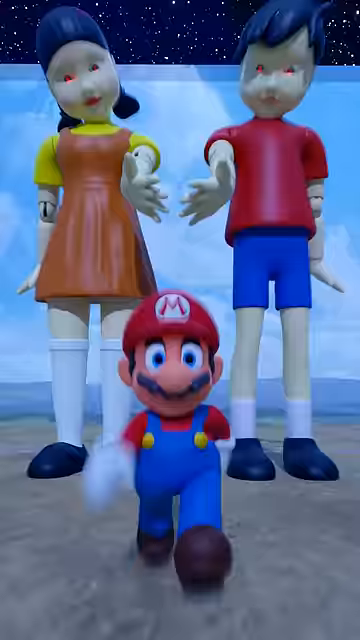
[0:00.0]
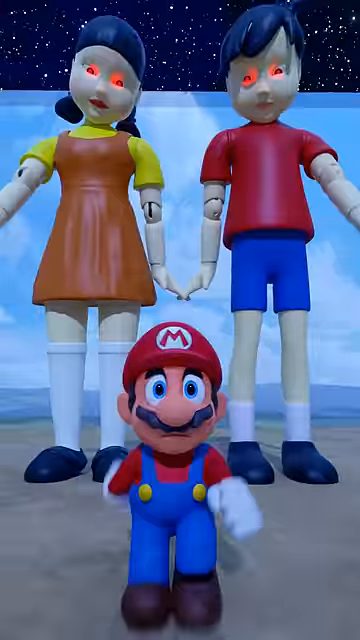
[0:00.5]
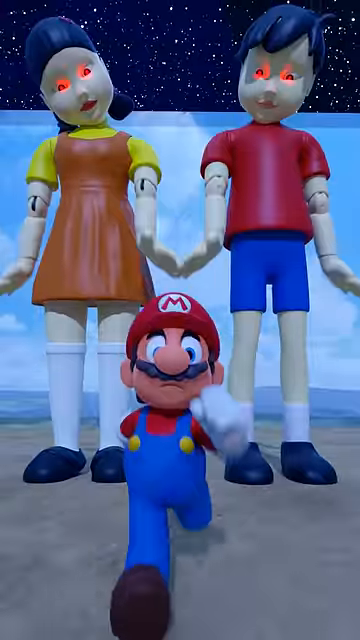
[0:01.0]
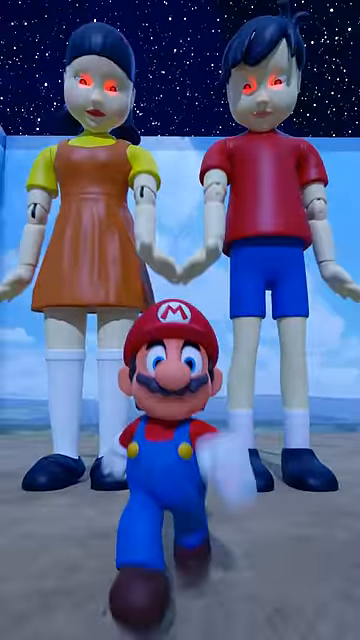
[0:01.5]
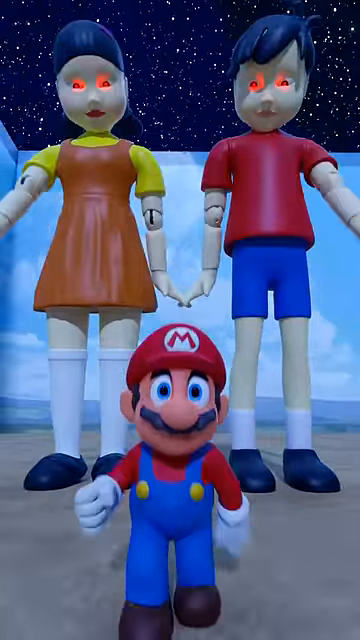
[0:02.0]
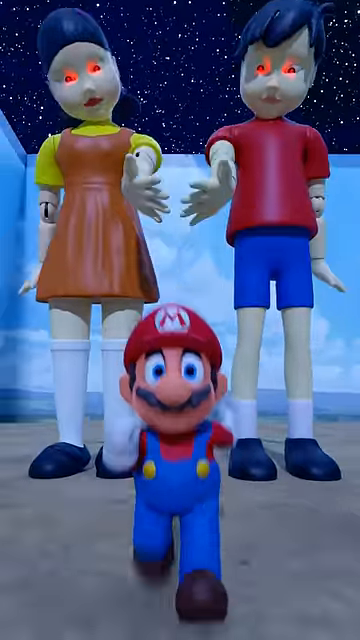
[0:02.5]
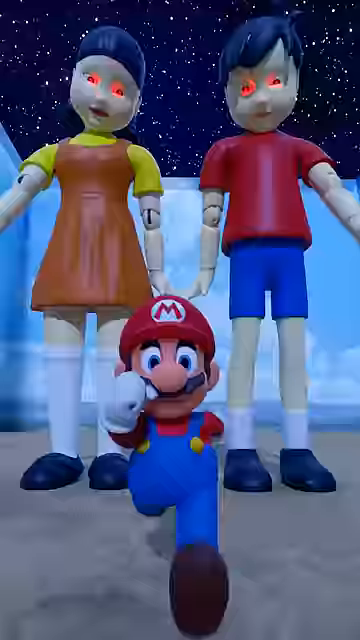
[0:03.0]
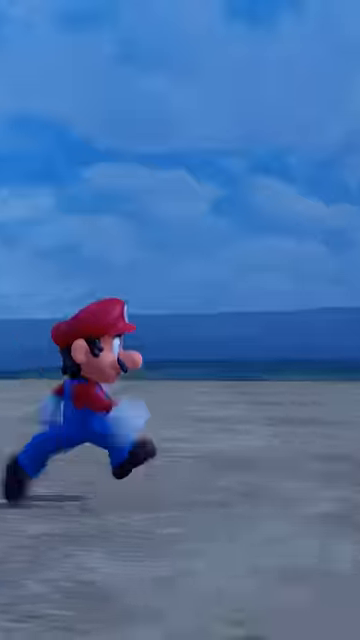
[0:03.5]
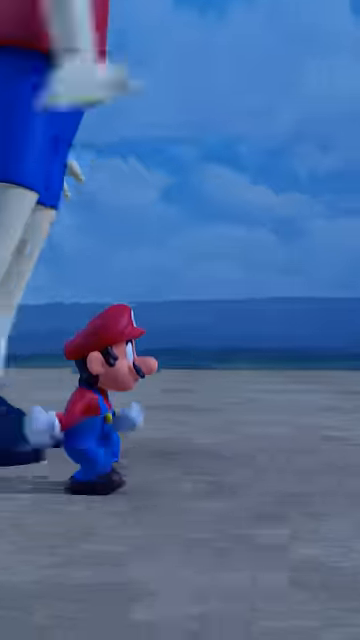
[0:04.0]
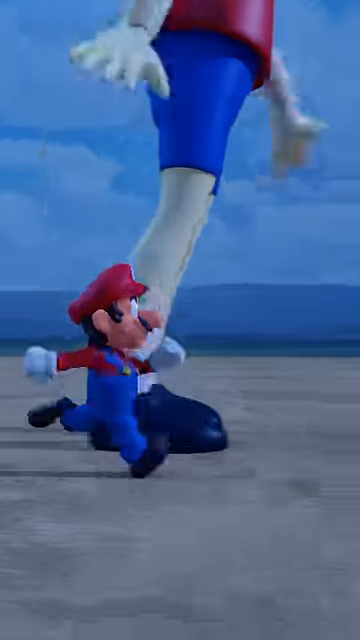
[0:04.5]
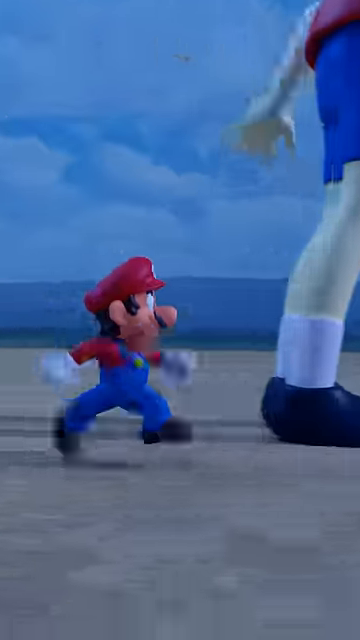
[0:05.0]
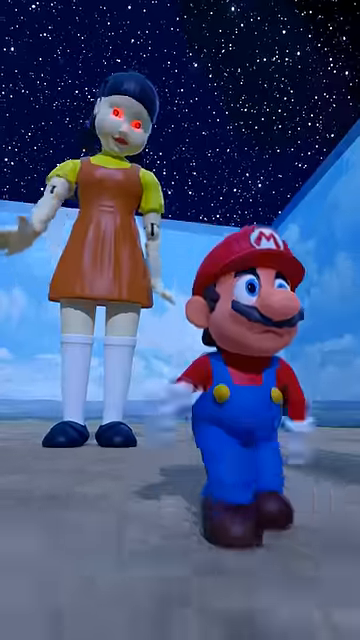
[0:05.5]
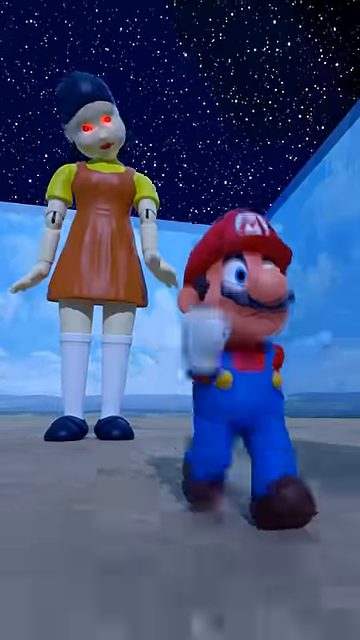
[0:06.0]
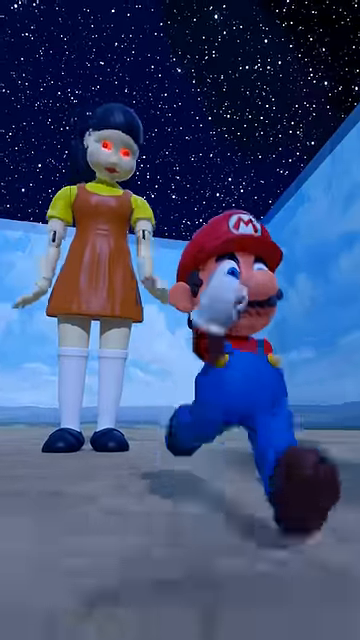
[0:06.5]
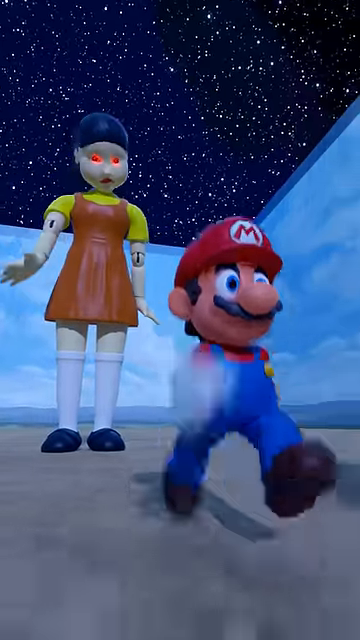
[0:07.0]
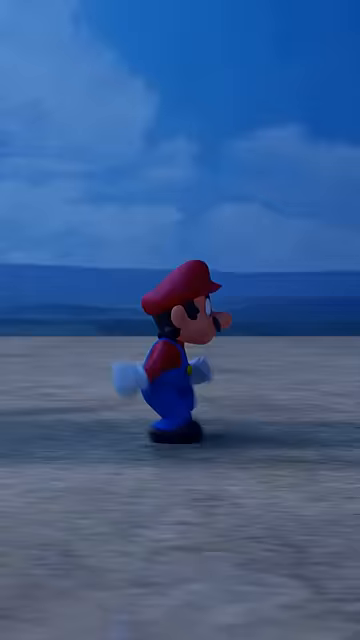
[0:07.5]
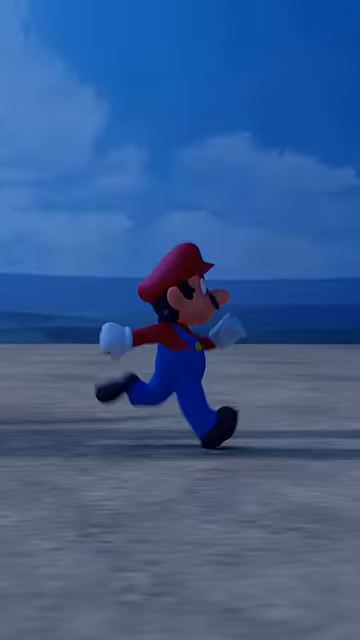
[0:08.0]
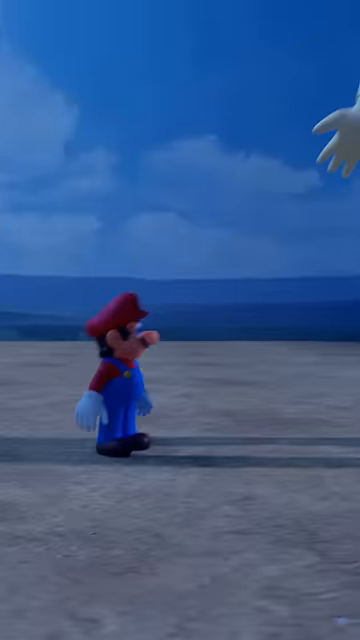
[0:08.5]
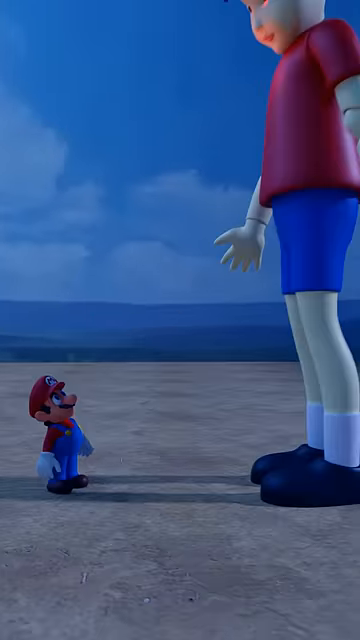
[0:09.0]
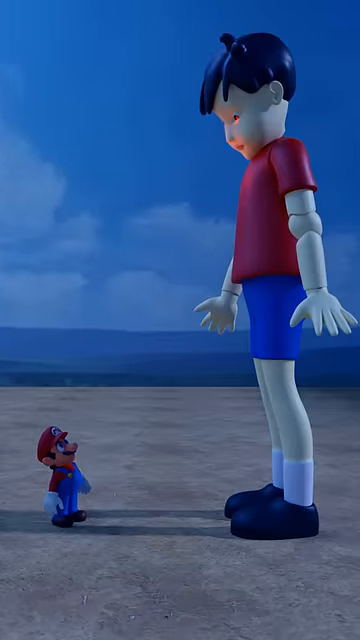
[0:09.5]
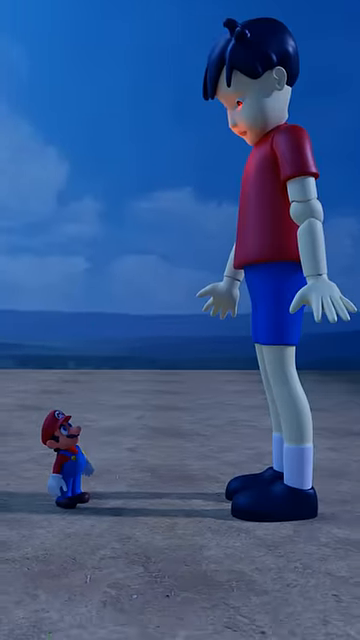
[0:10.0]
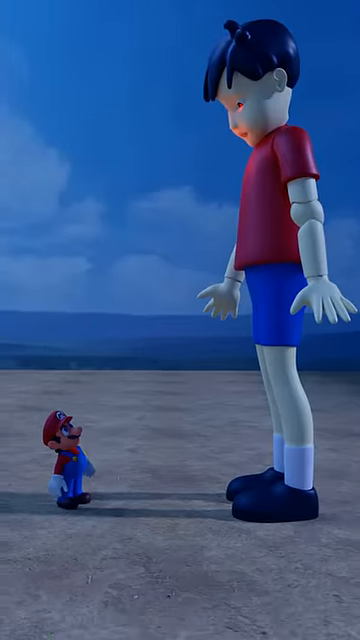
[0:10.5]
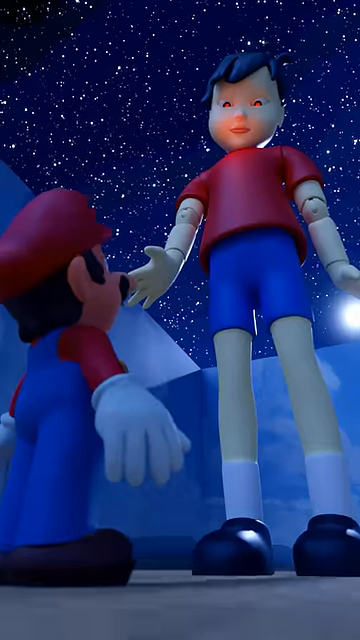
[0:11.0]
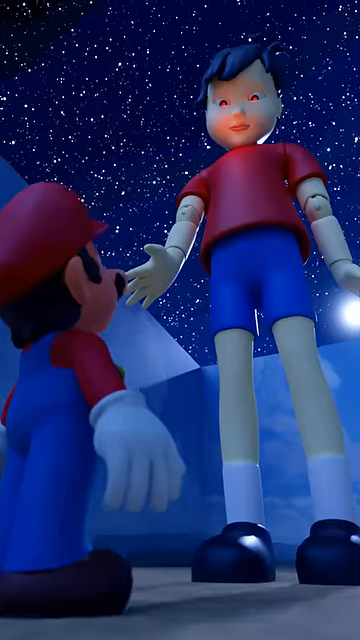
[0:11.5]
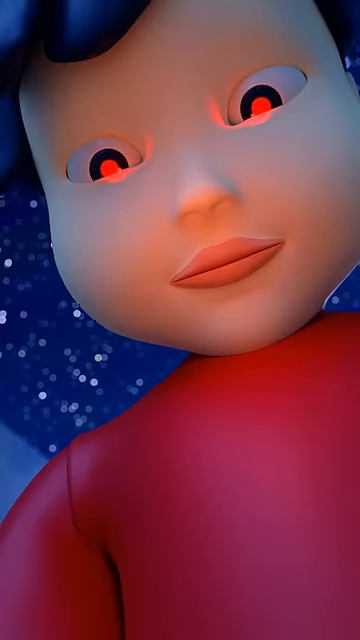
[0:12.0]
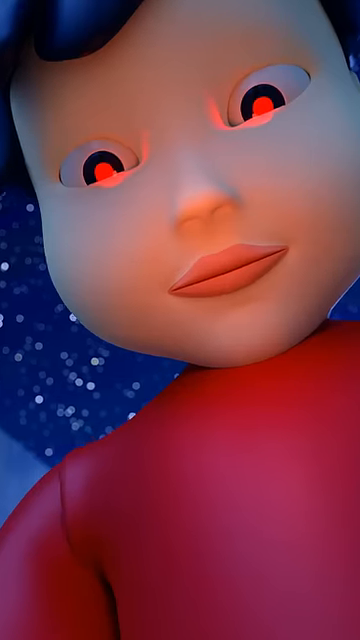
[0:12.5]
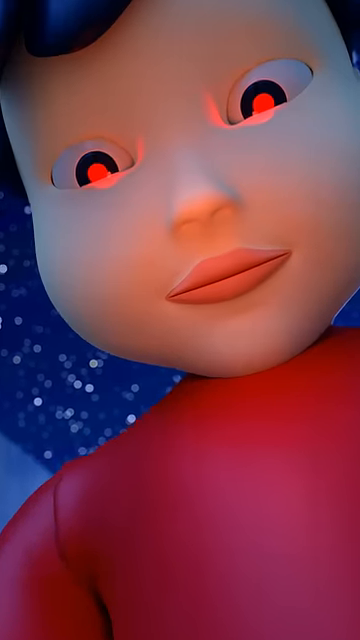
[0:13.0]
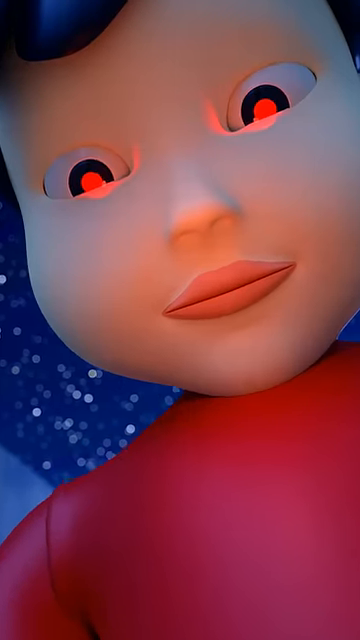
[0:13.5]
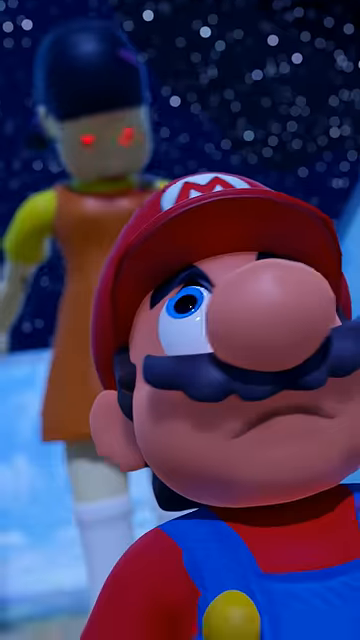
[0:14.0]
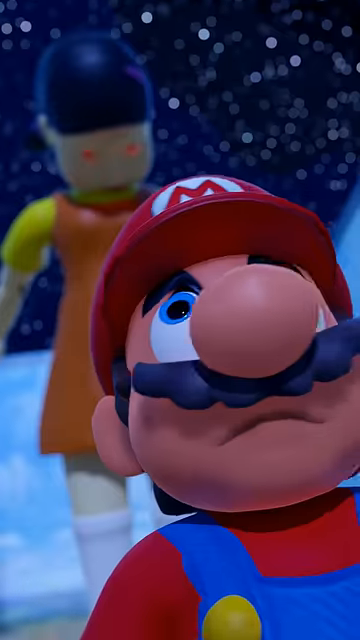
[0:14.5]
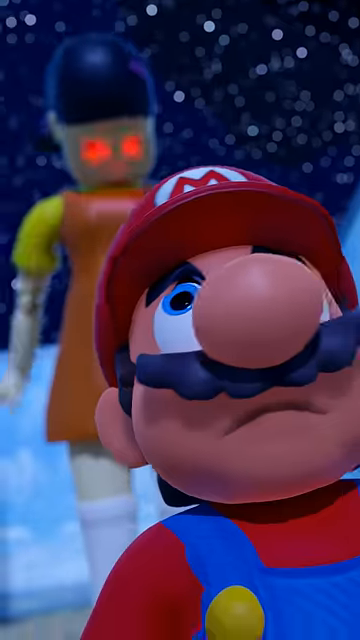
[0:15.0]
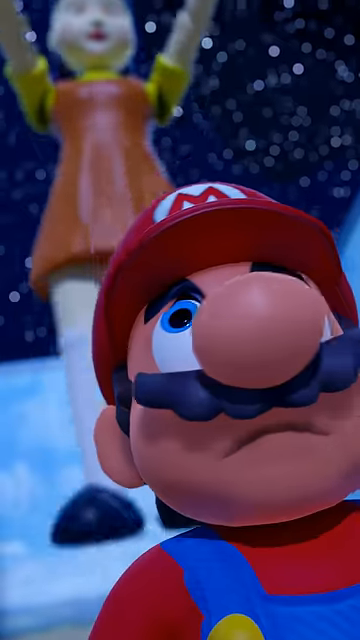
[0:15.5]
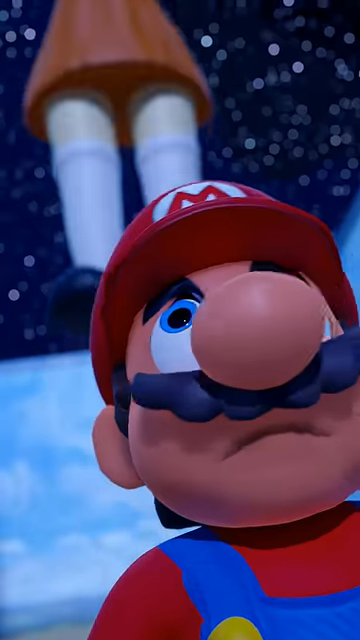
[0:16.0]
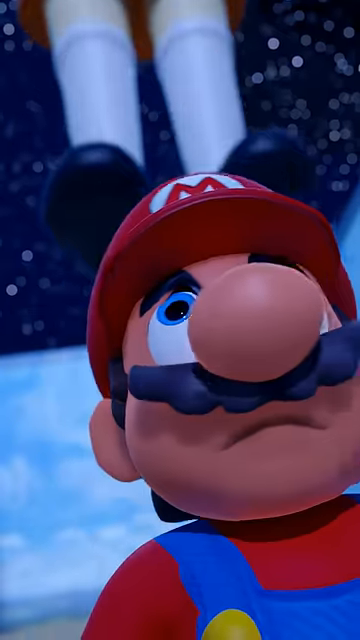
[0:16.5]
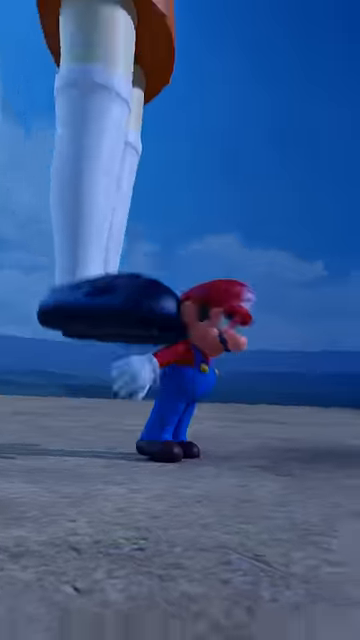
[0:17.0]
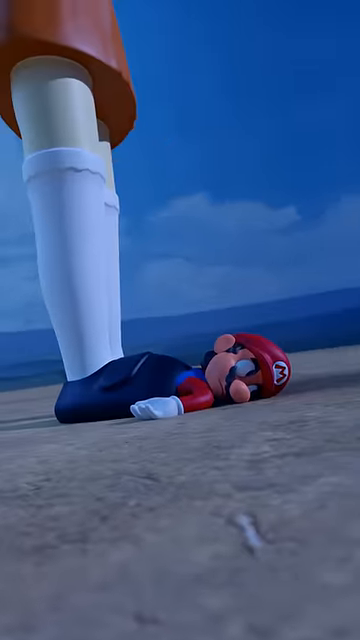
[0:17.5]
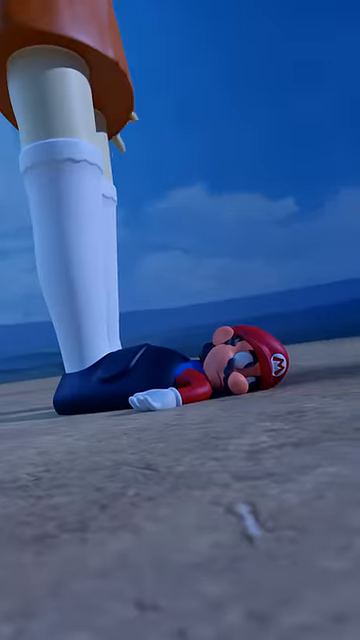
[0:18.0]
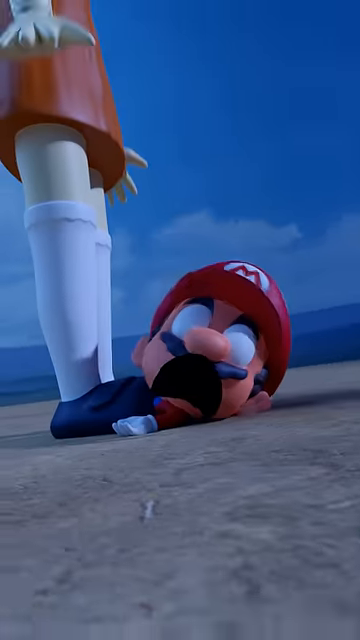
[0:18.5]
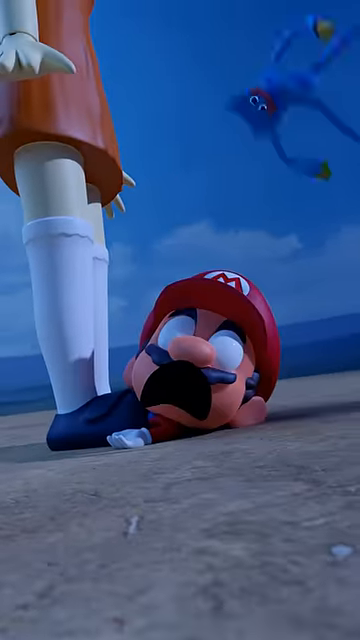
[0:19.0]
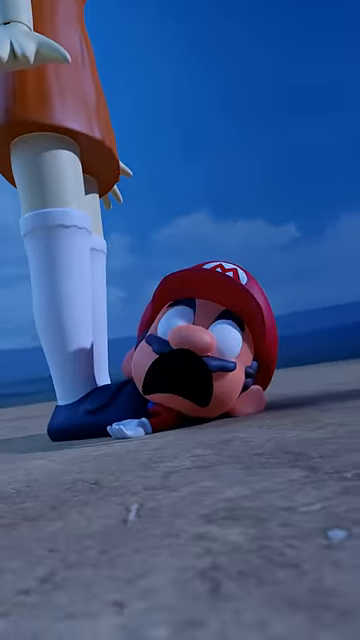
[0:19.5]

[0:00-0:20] The dolls from Squid Game appear alongside Mario, and they are moving. Mario runs away from the girl doll, and the male doll comes along with little laser eyes going. The girl doll then jumps on top of Mario, and his eyes bug out. Mario keeps running. There are no mushrooms or the other things Mario usually jumps on. The video is possibly a commercial.